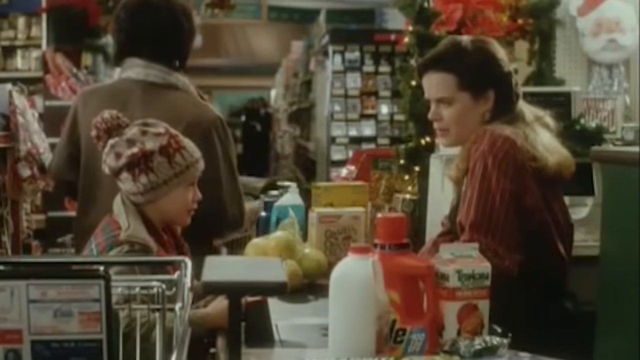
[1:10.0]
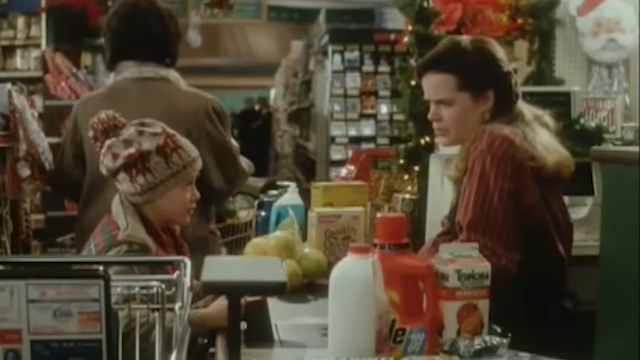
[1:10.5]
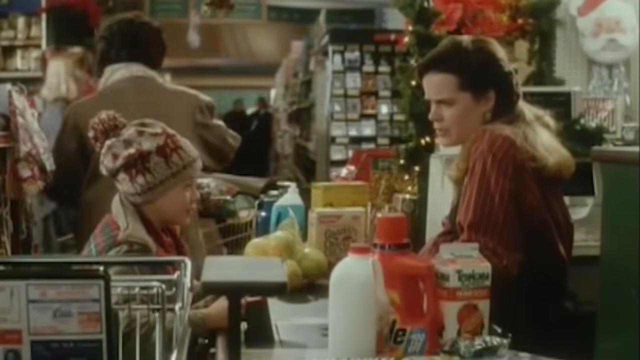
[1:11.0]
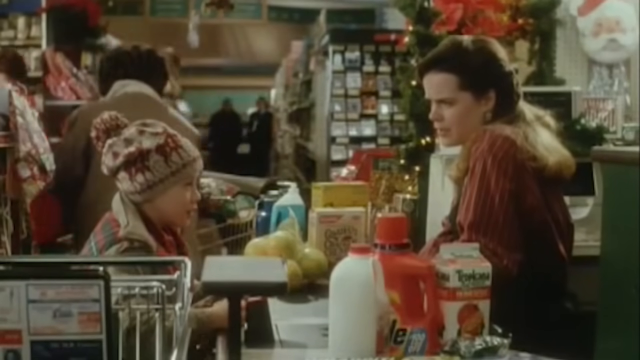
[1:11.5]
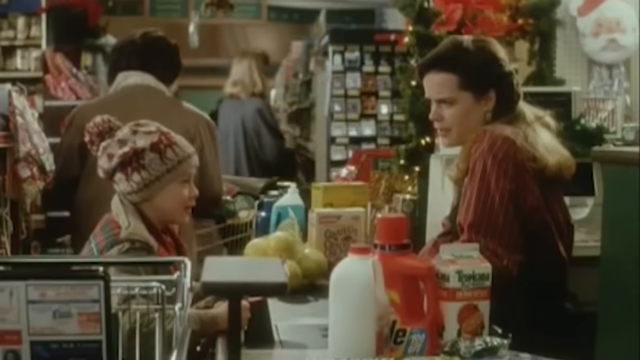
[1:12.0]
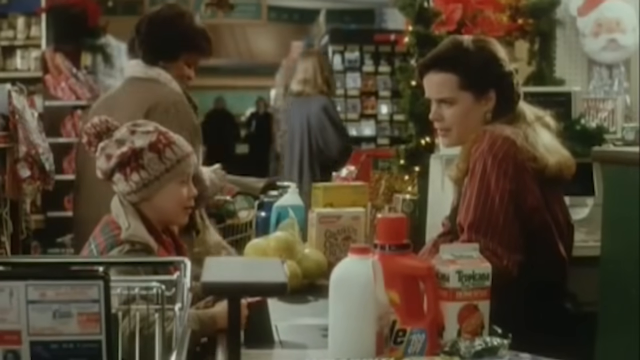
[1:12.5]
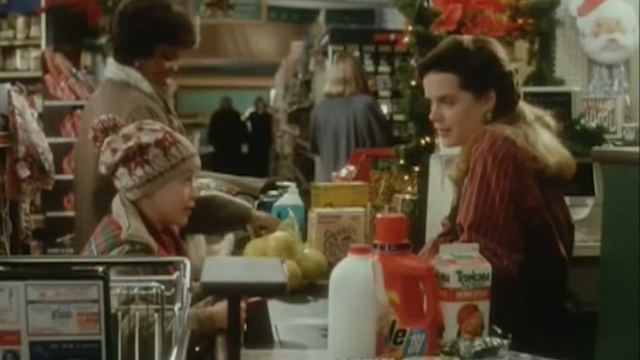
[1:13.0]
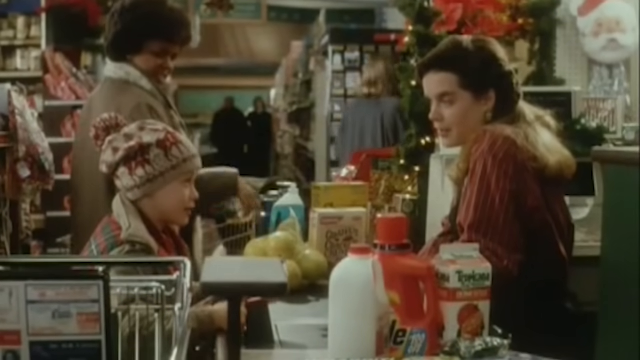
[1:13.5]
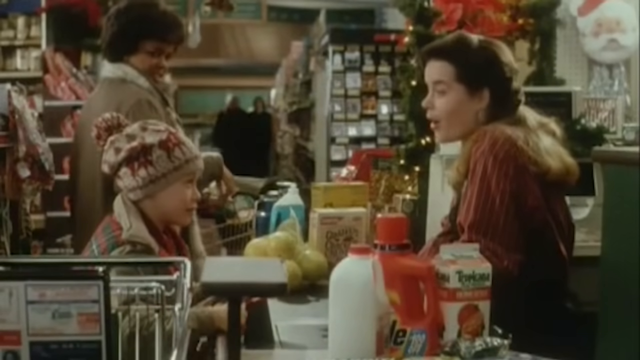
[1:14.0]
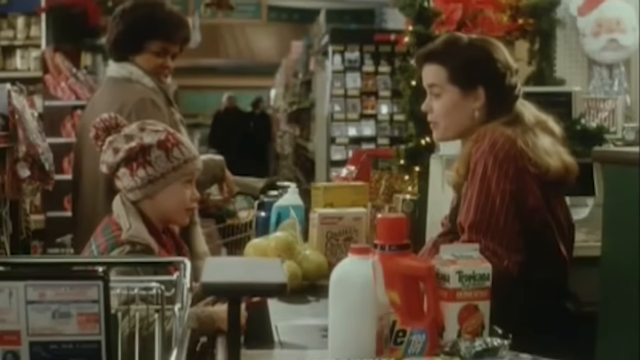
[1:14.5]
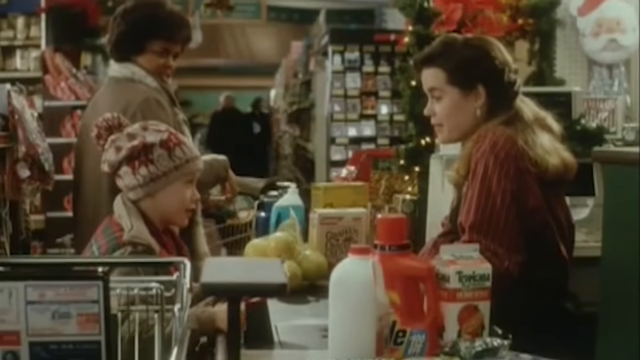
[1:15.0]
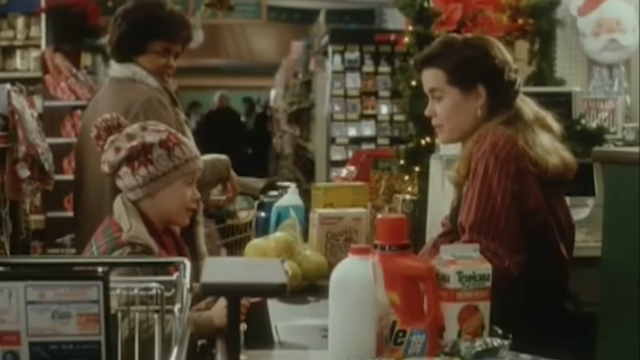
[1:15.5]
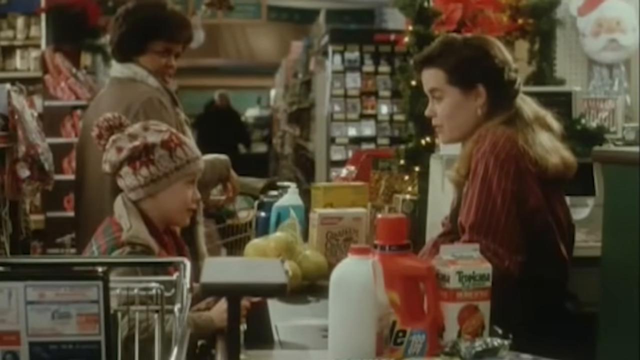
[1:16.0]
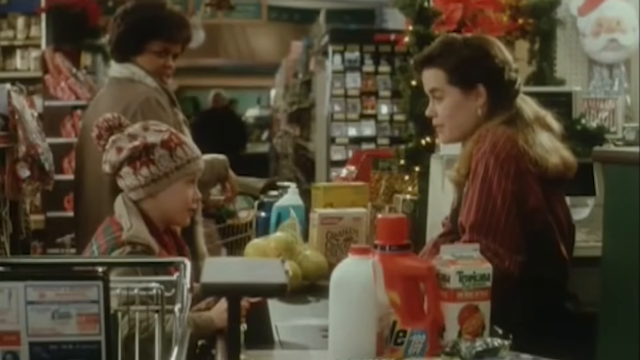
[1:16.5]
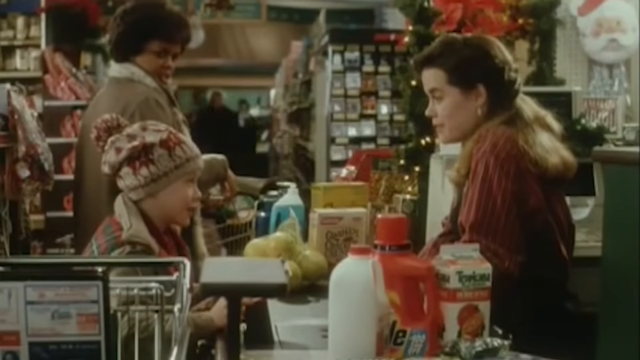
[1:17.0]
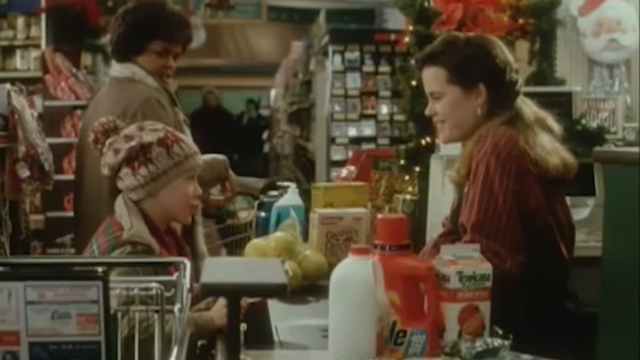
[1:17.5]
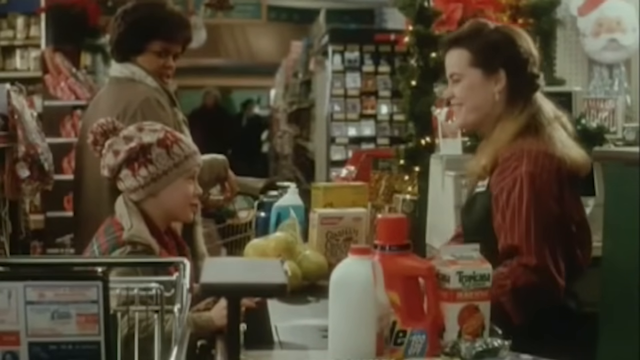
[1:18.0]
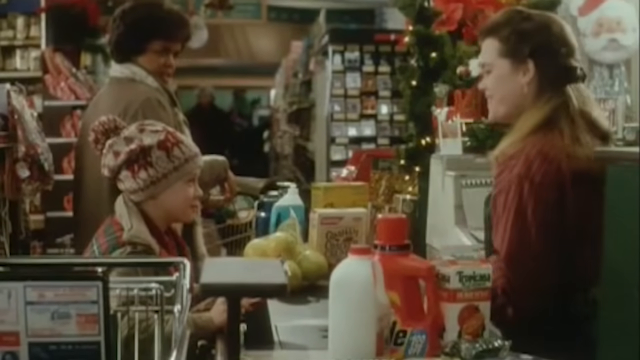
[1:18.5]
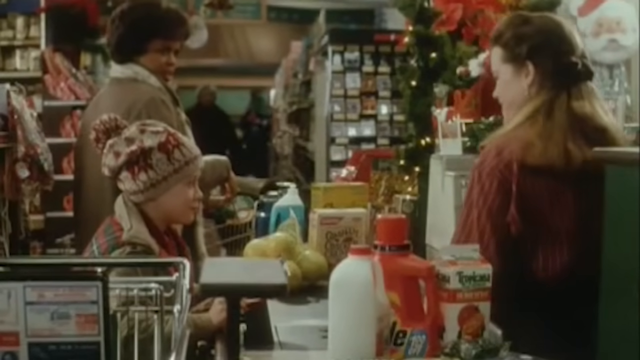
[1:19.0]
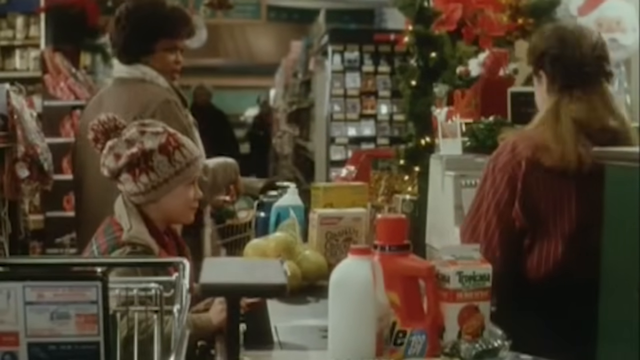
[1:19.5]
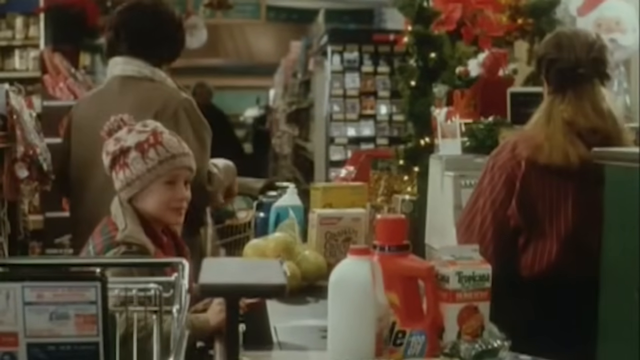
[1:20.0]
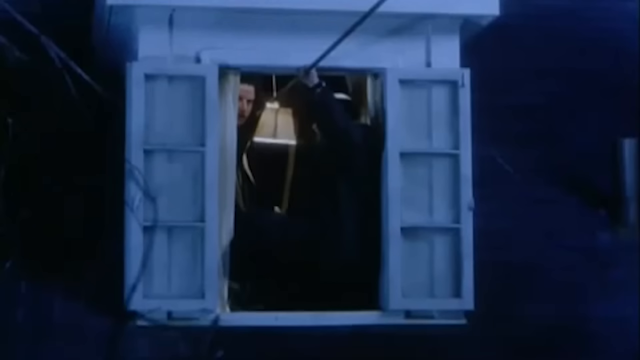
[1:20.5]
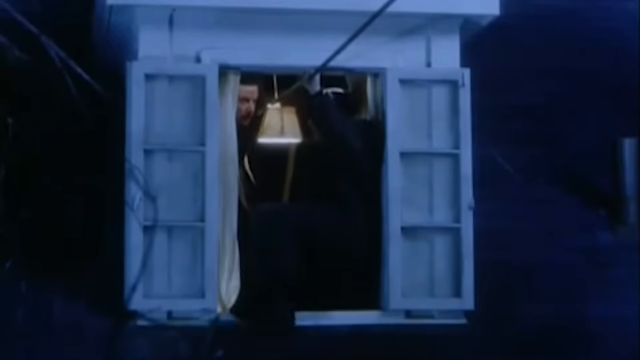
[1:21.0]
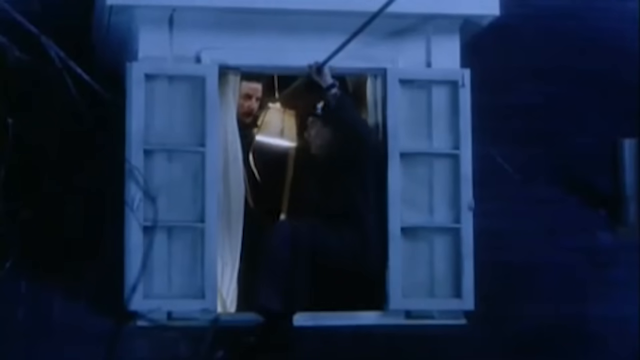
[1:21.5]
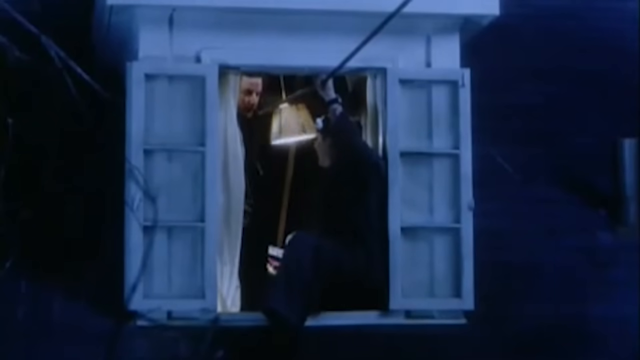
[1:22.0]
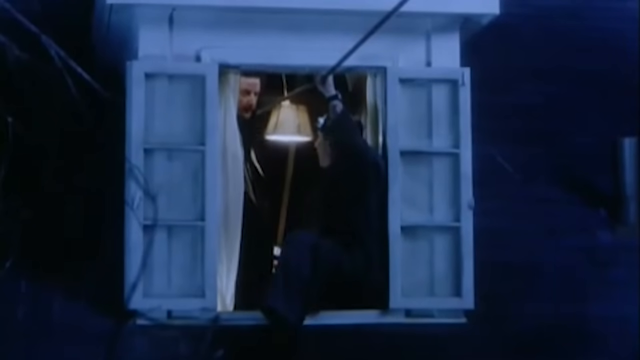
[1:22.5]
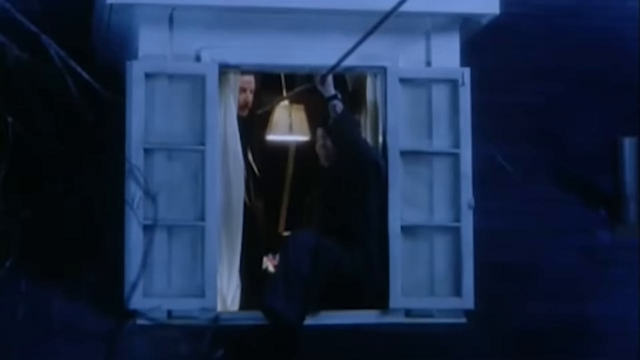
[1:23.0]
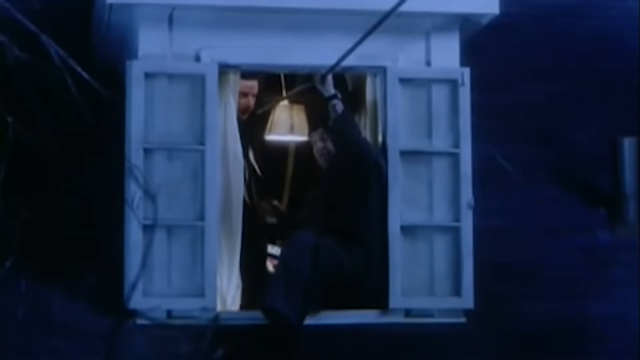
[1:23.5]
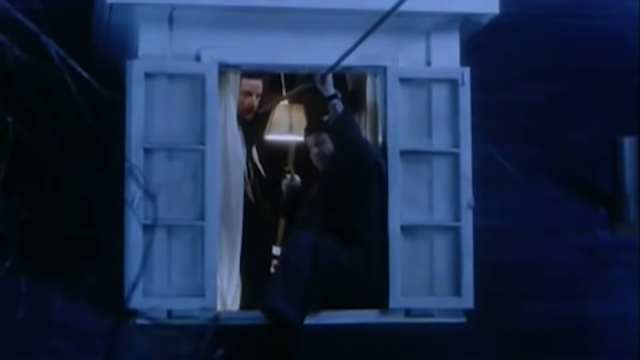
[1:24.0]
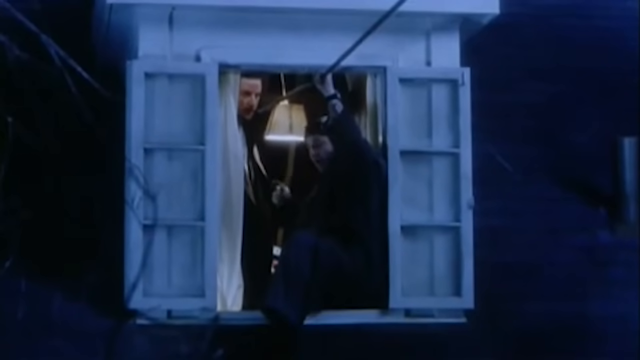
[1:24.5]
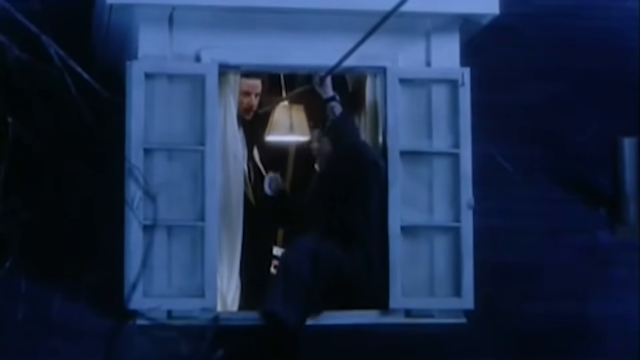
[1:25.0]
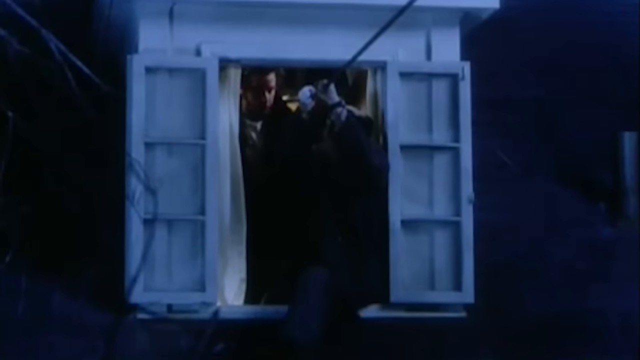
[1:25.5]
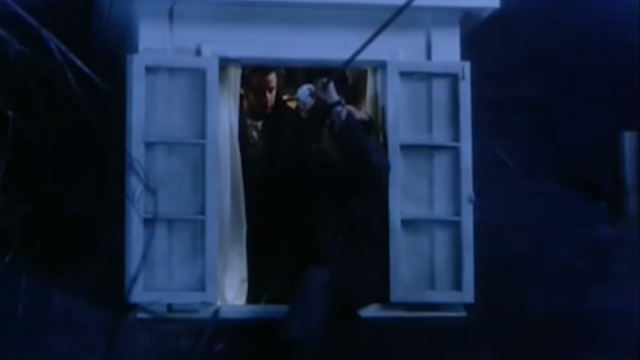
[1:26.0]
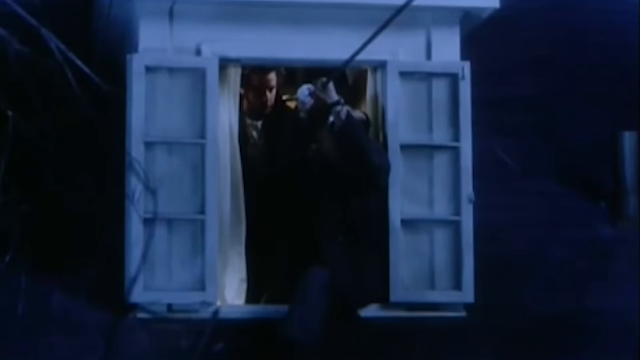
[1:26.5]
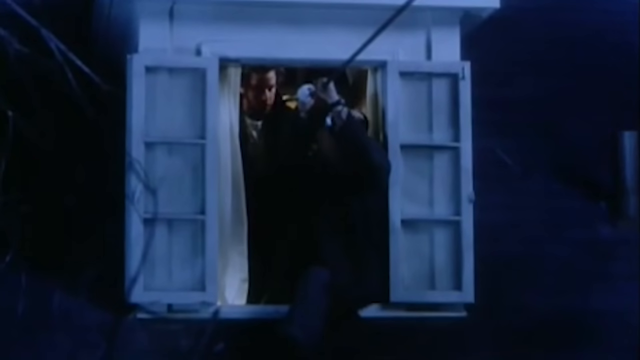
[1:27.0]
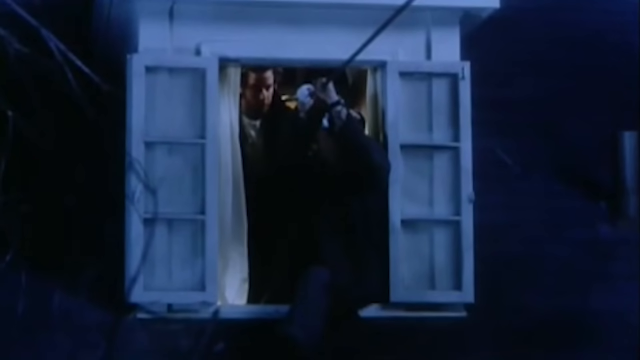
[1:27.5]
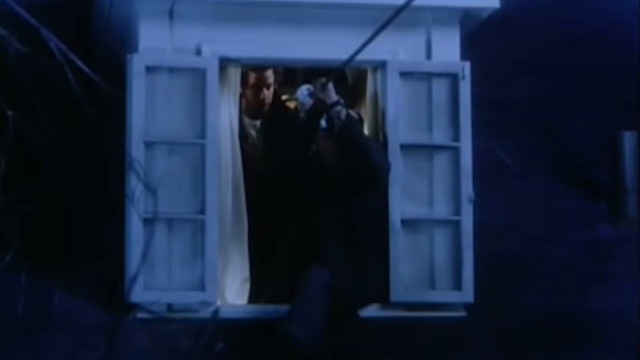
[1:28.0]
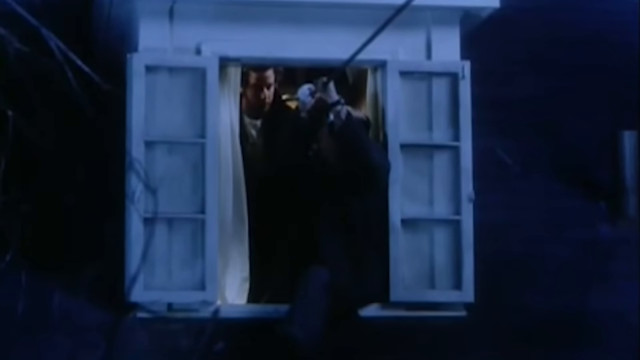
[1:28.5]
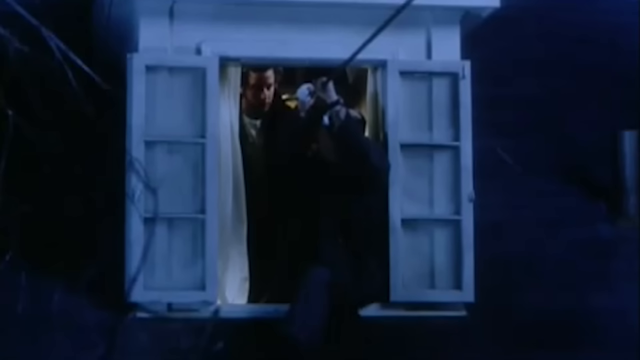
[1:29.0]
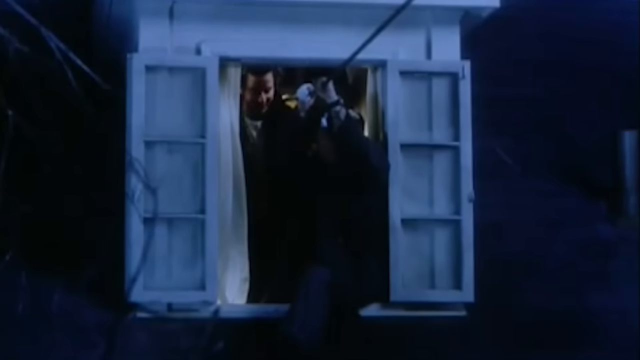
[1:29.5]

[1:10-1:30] Kevin has groceries such as orange juice, milk and a red container. He wears a hat with a red stag on it. Behind him, other people wait in queues, taking their groceries from a shopping cart. At the top right is a picture of Santa. Kevin pulls out a newspaper, and the people behind them suddenly look at him. Then two thieves are on a line: one goes along the line, trying to cross a certain distance, while the other thief is behind him. The window doors are open and it is dark outside.